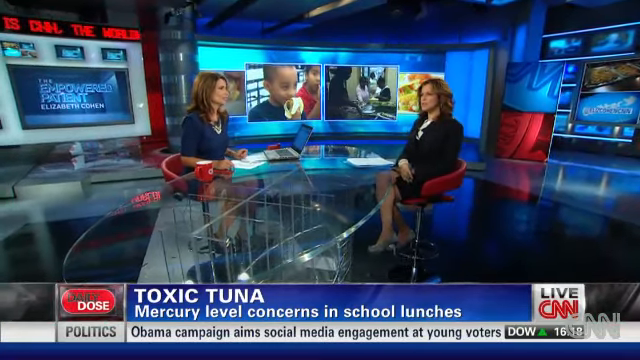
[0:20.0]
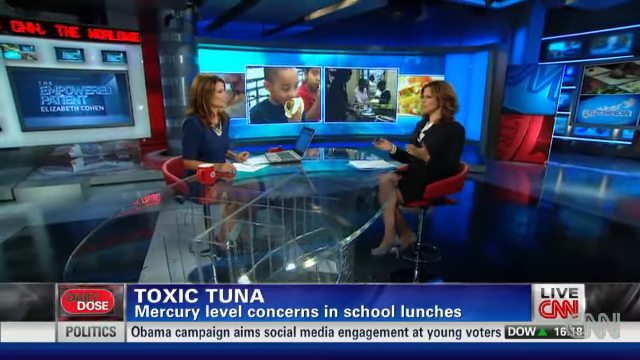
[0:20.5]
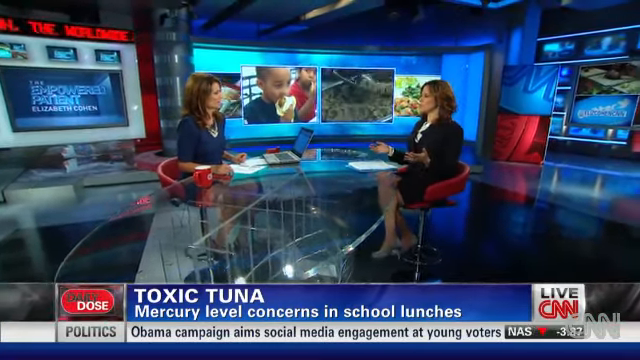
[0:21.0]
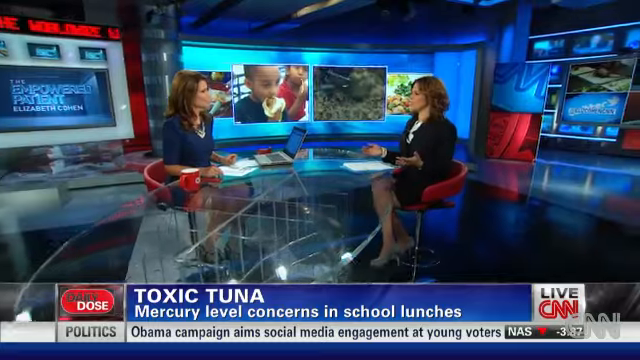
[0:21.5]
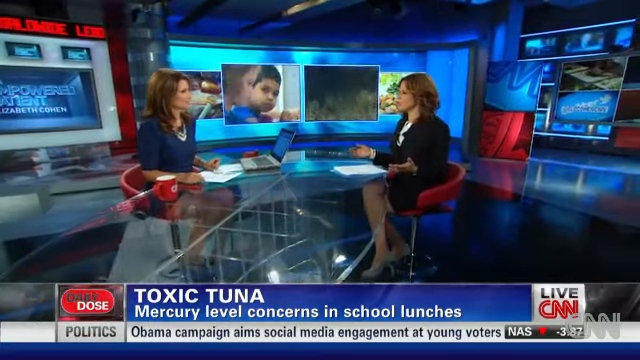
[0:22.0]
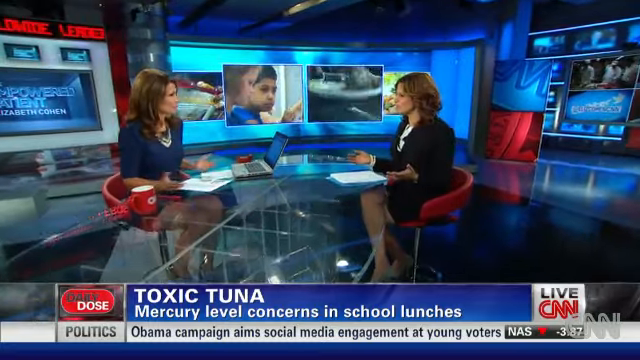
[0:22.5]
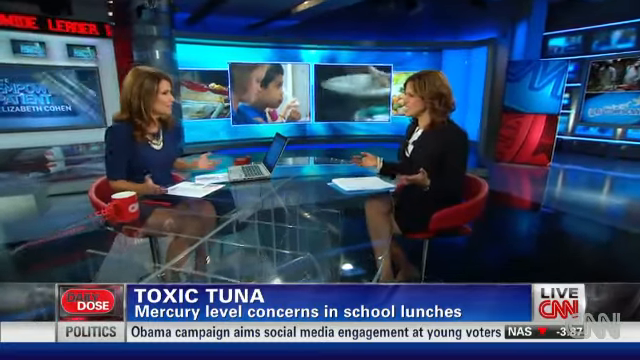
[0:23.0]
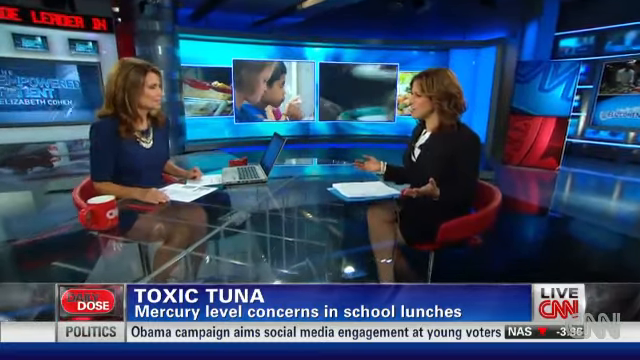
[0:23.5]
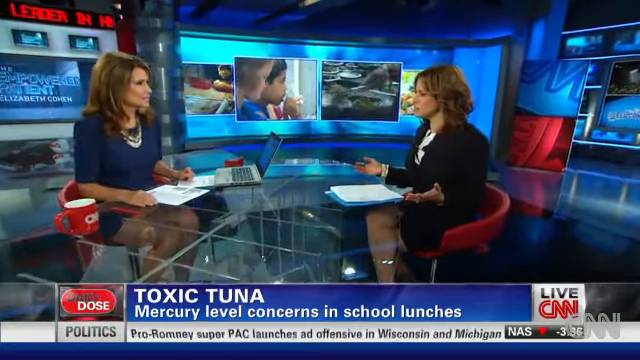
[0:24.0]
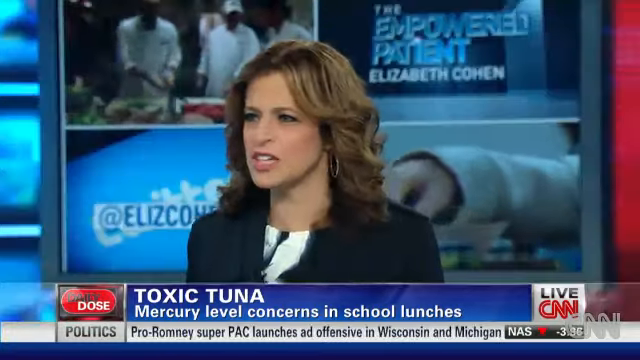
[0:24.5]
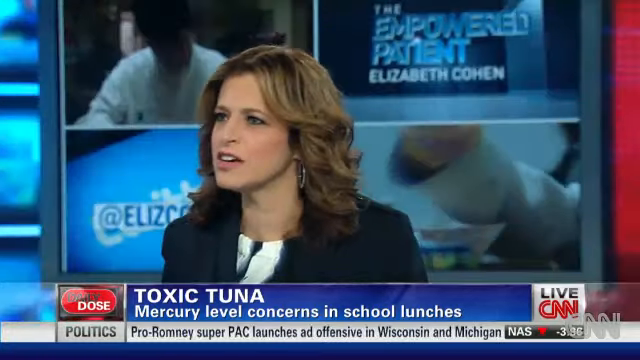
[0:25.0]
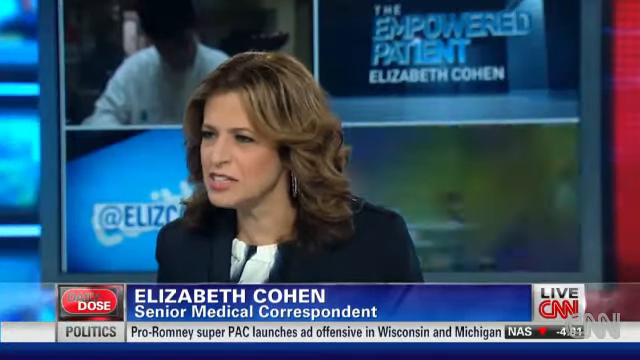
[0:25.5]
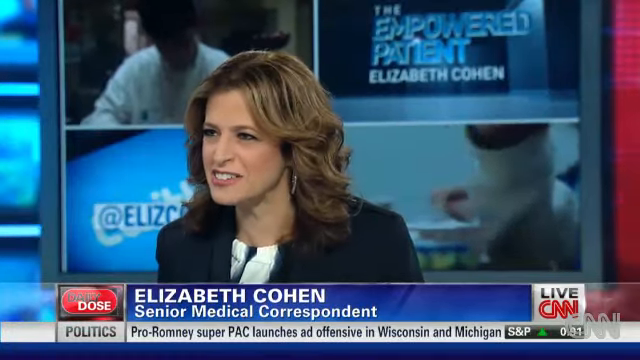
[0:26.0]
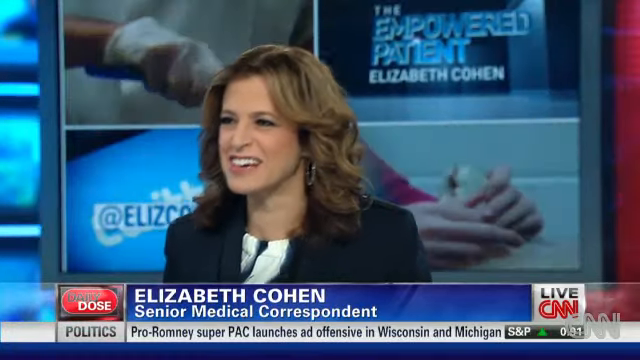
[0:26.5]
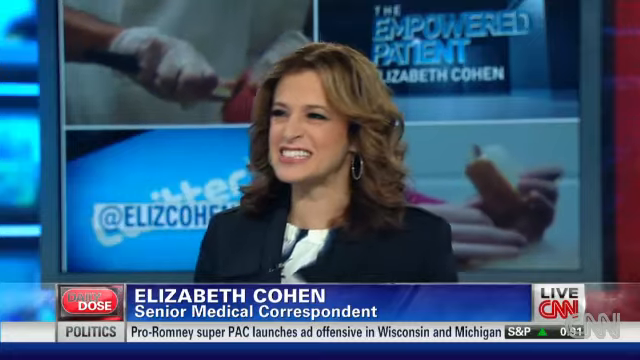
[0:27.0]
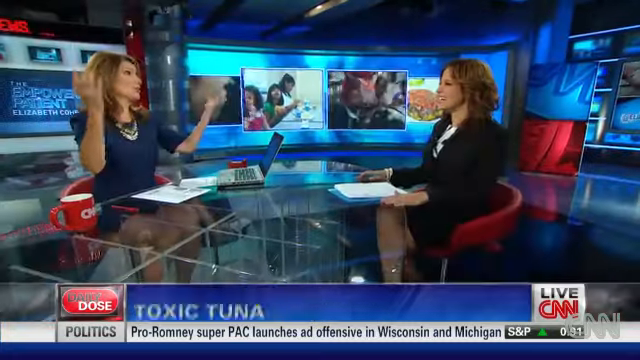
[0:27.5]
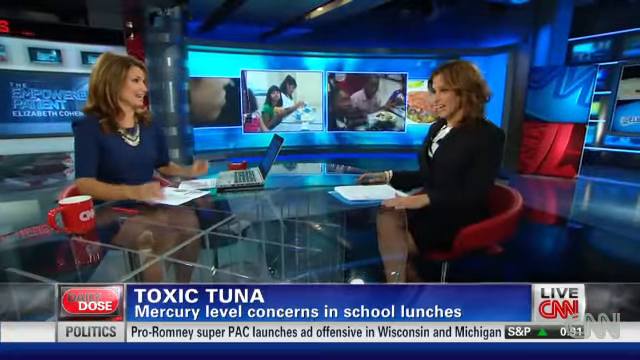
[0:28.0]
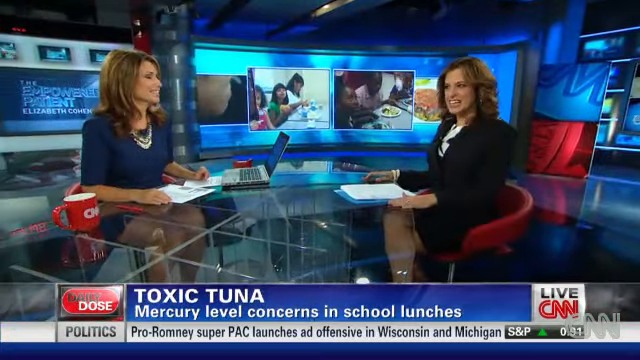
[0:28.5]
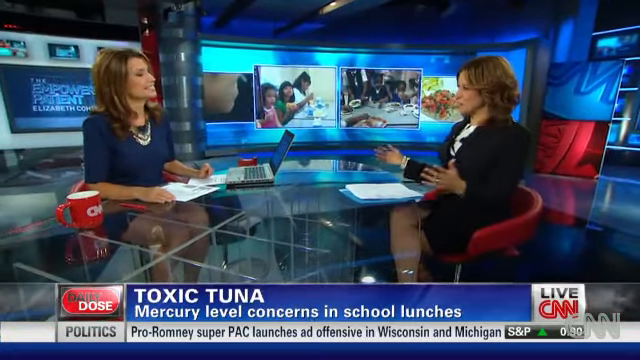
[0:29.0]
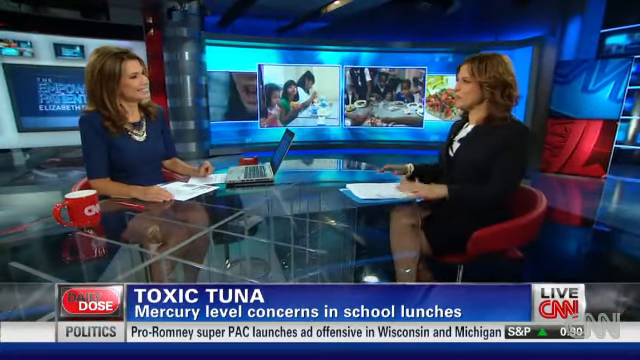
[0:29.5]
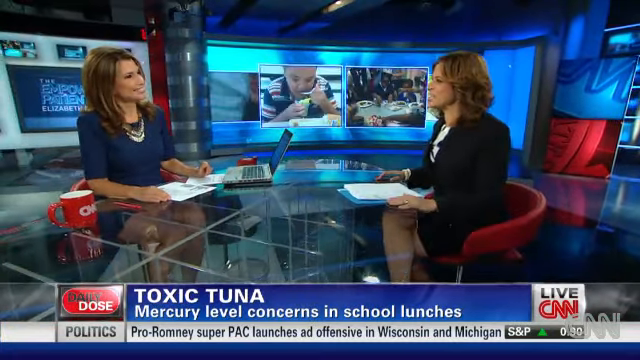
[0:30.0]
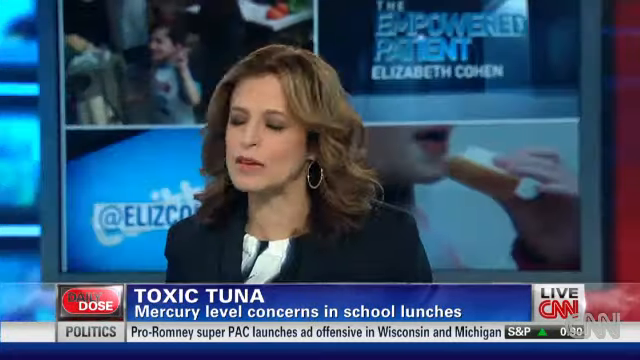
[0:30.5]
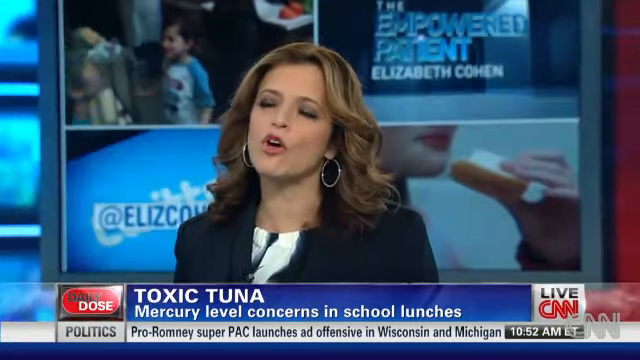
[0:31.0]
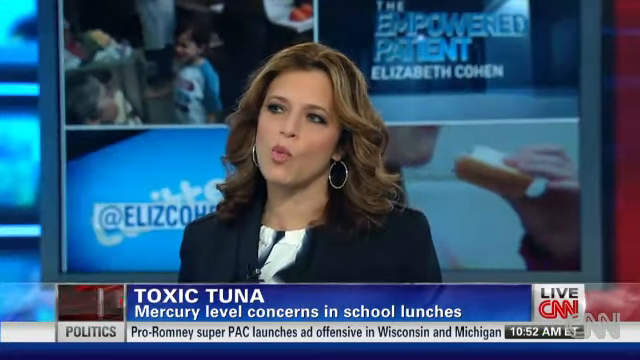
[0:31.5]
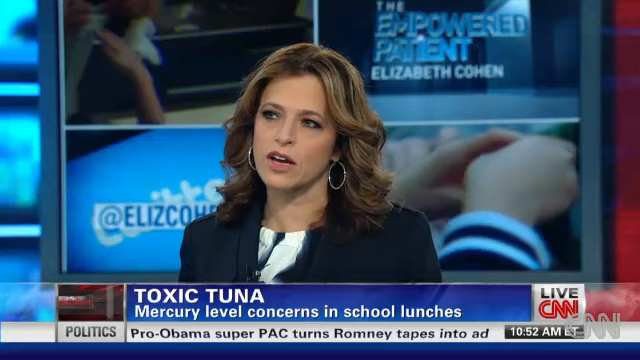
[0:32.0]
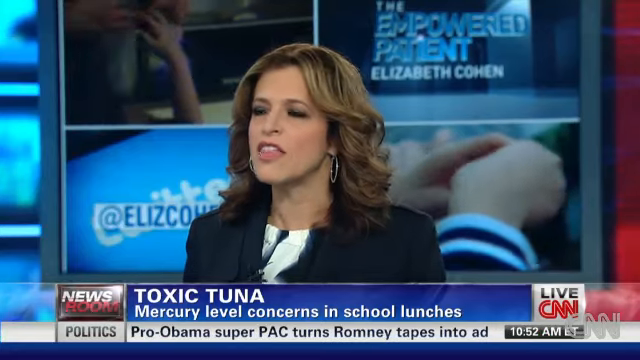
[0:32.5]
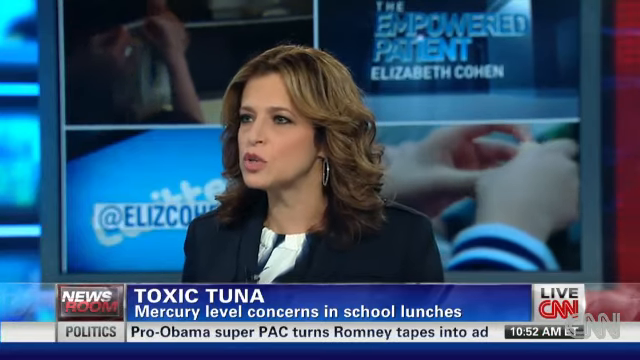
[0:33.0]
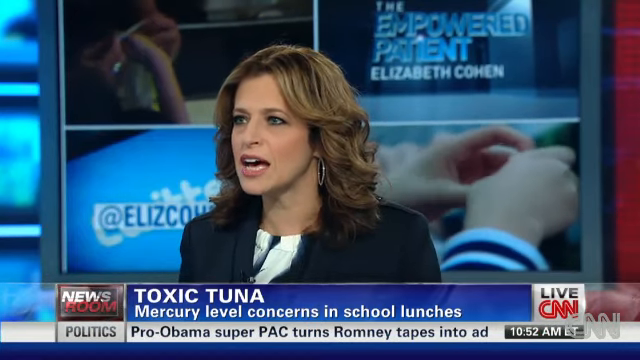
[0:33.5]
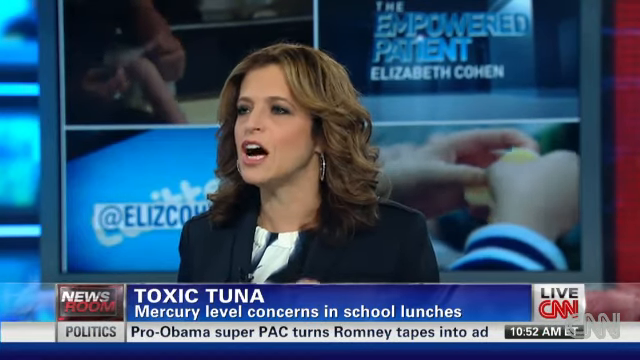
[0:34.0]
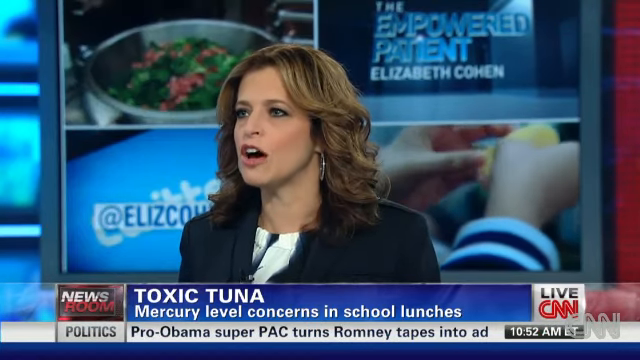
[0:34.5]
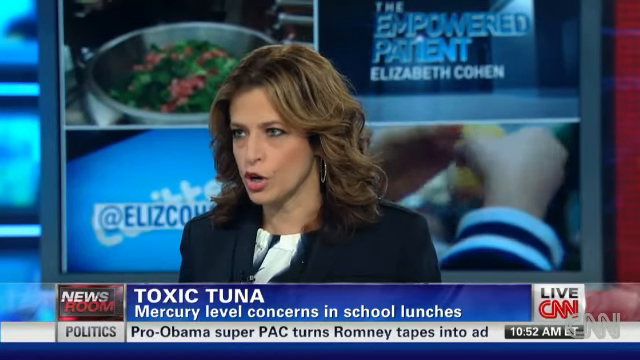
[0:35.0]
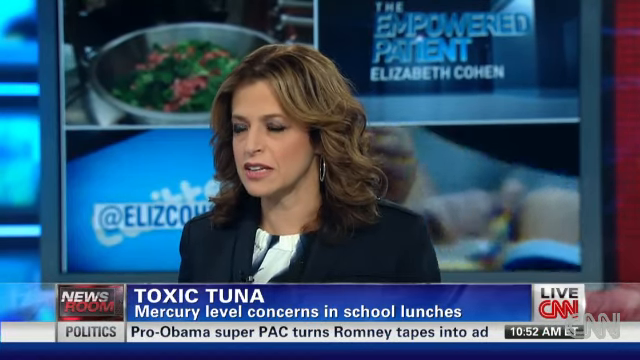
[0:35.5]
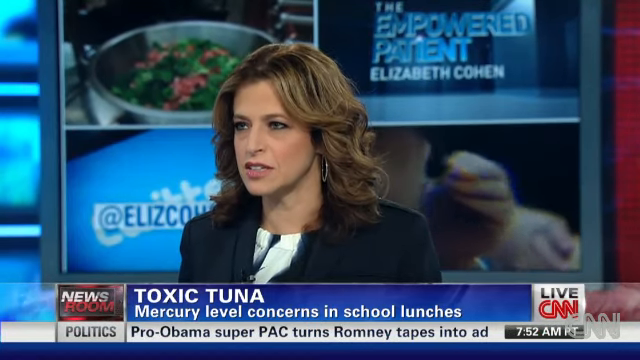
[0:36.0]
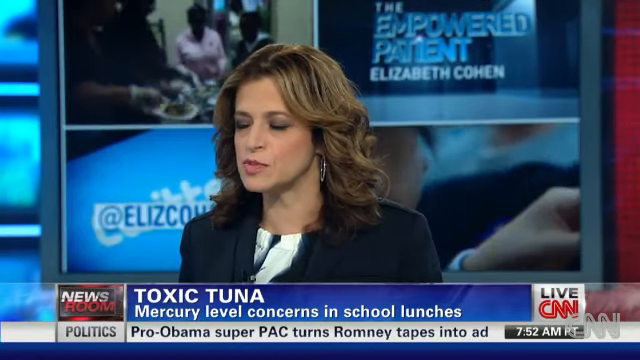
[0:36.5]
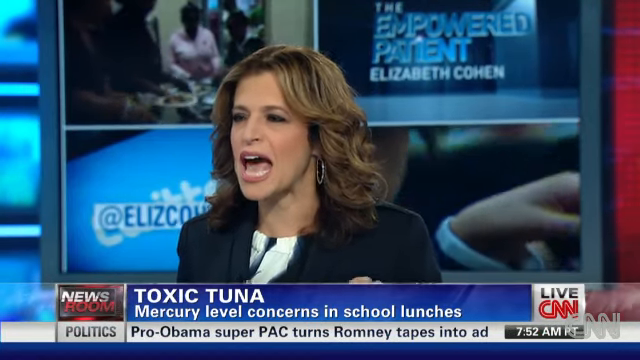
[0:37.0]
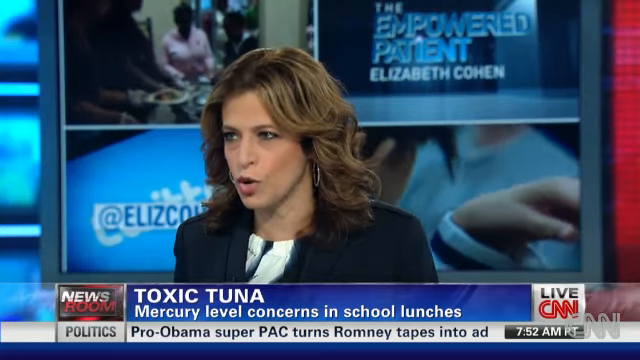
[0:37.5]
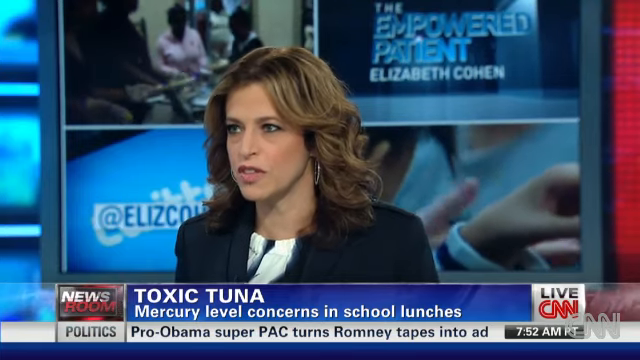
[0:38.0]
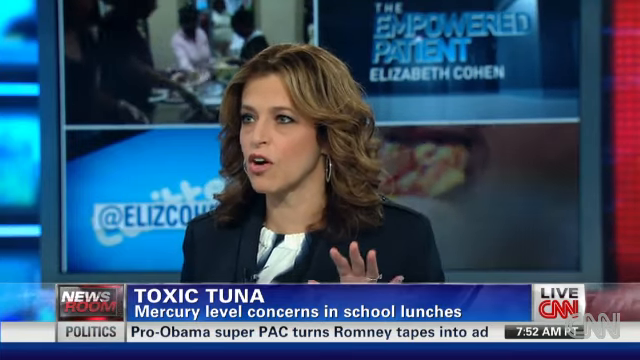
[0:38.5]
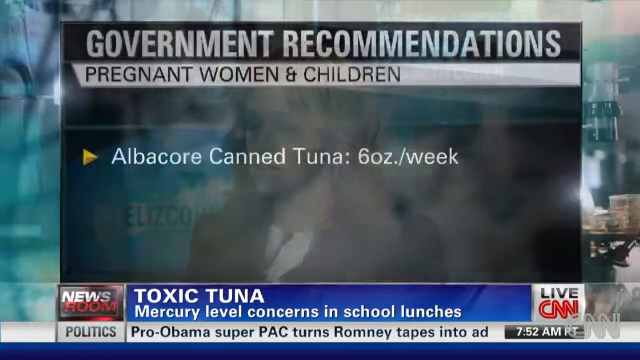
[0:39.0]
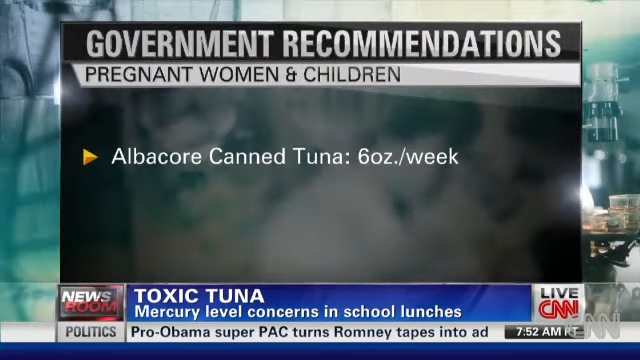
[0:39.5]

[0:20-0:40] The screen seems very busy, with various pictures of children on it. The other woman, in a suit, is the guest. There are CNN tickers everywhere, and it looks like the name behind her is Elizabeth Cohen, a correspondent on the channel. There are a lot of busy clips and activity, with many images and clips of young children being displayed.